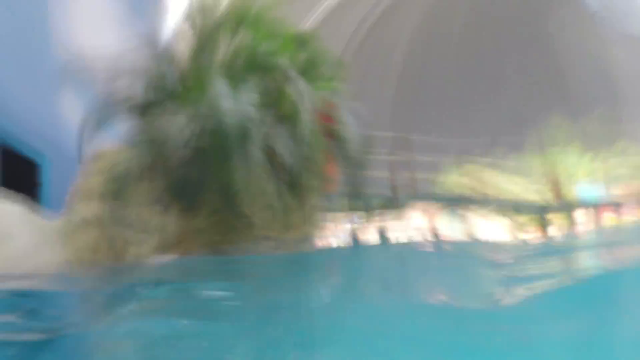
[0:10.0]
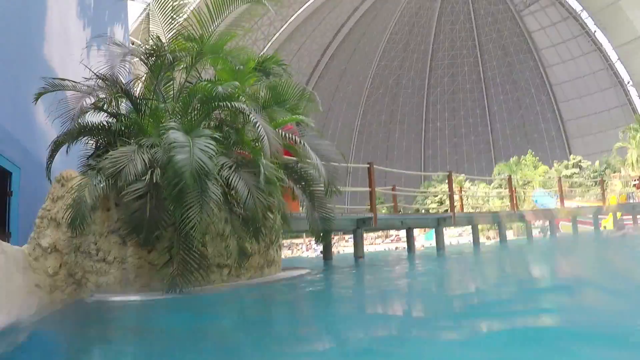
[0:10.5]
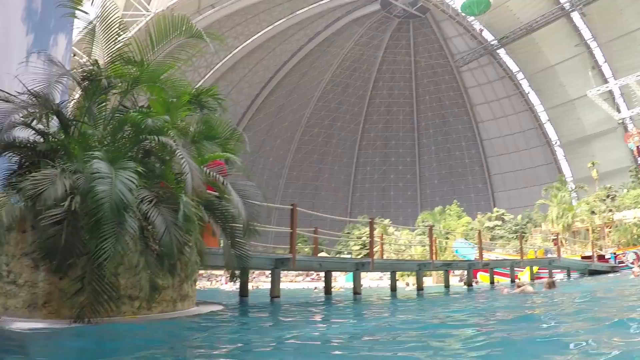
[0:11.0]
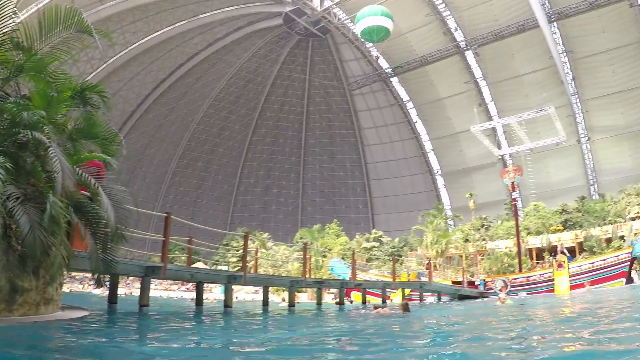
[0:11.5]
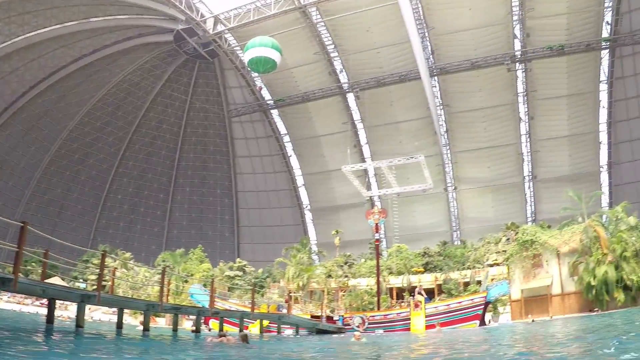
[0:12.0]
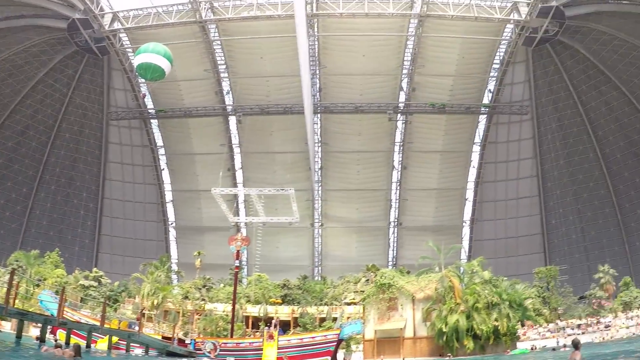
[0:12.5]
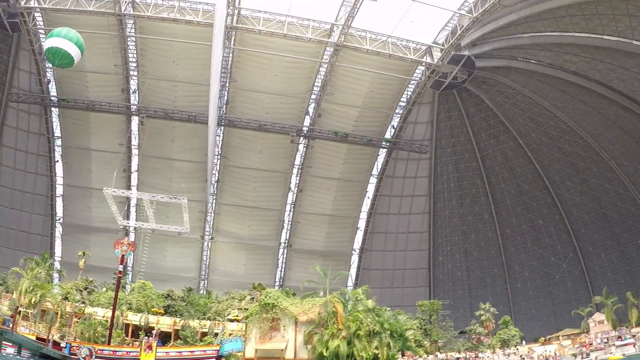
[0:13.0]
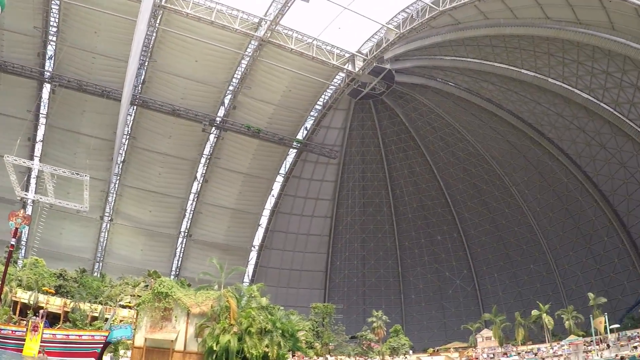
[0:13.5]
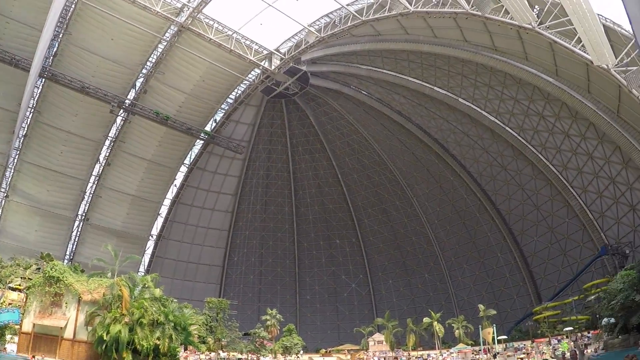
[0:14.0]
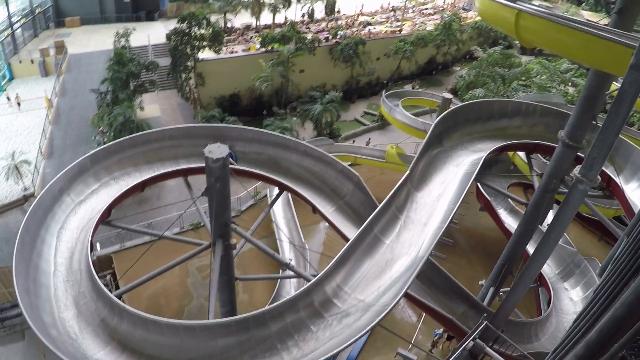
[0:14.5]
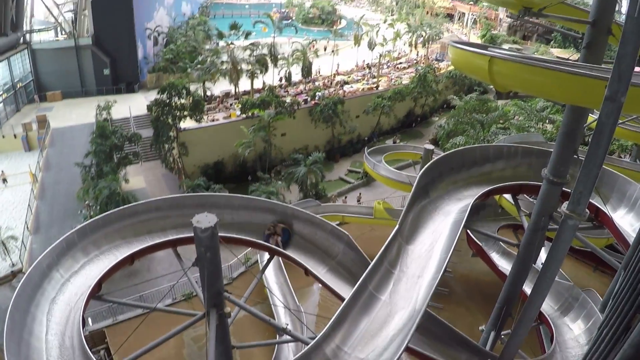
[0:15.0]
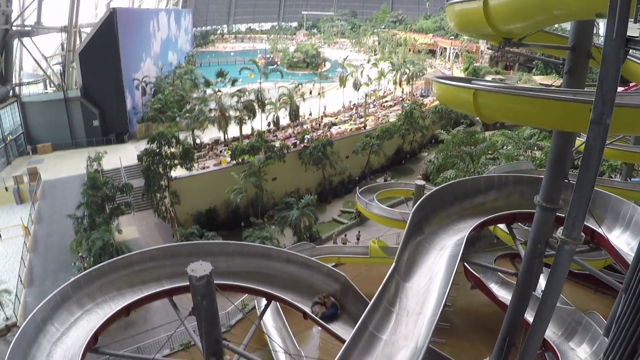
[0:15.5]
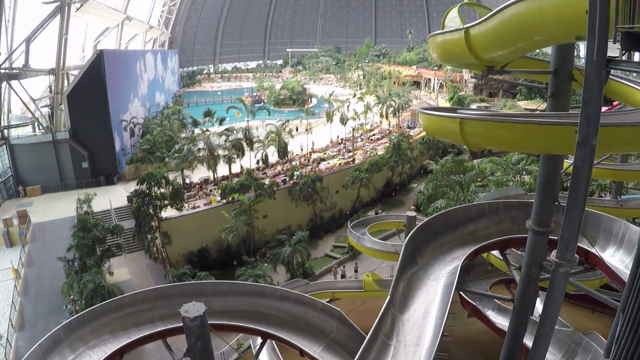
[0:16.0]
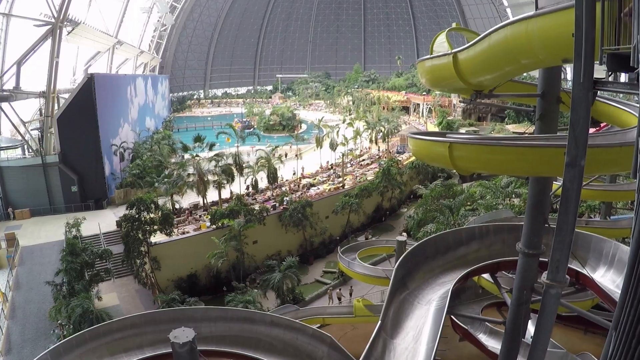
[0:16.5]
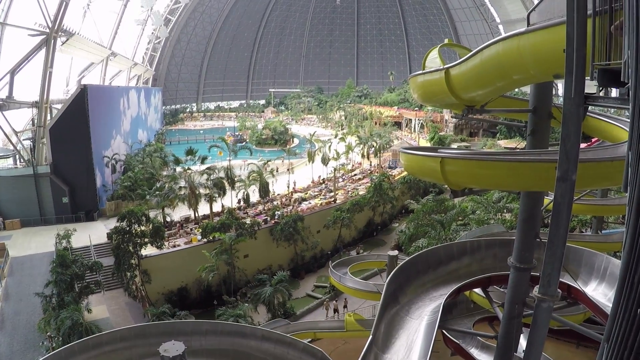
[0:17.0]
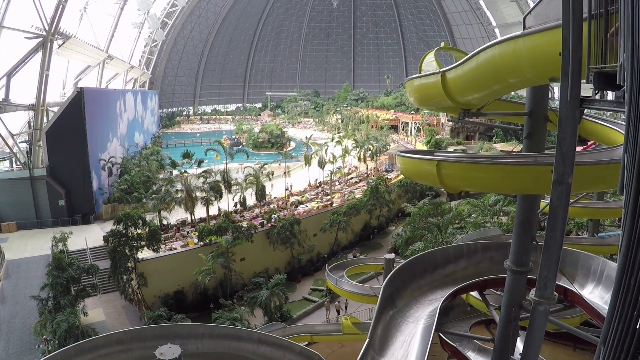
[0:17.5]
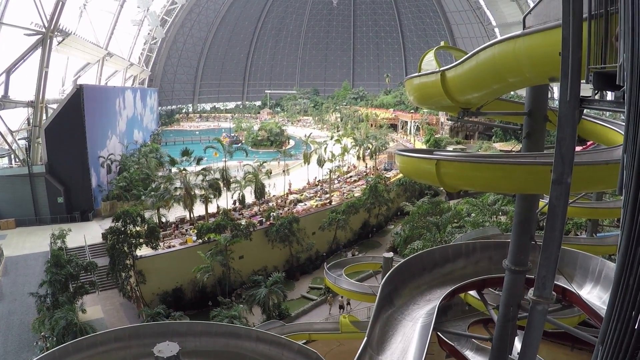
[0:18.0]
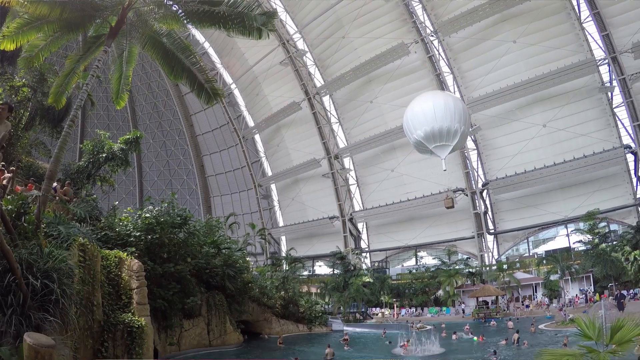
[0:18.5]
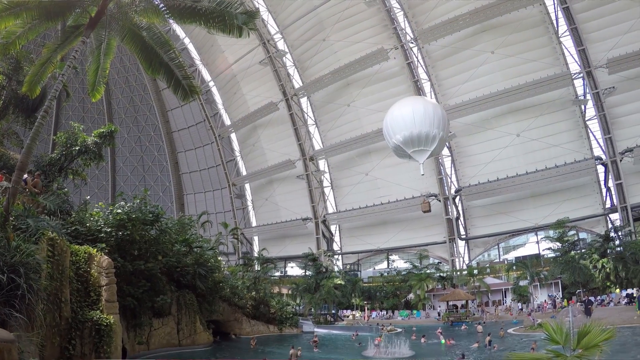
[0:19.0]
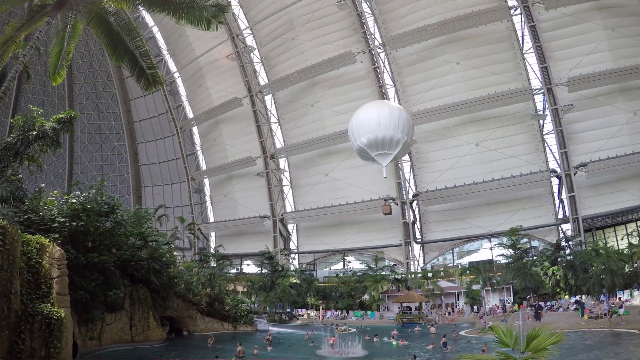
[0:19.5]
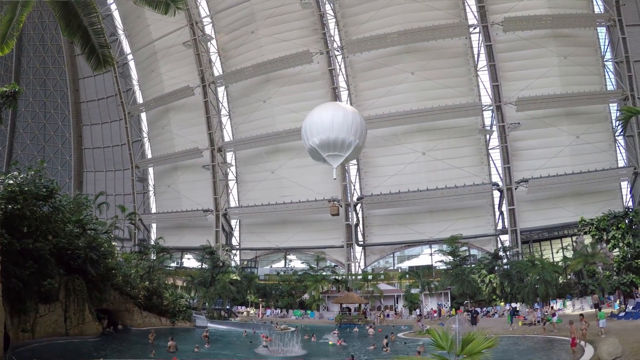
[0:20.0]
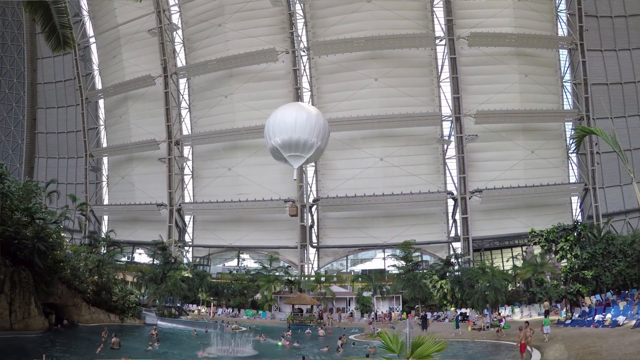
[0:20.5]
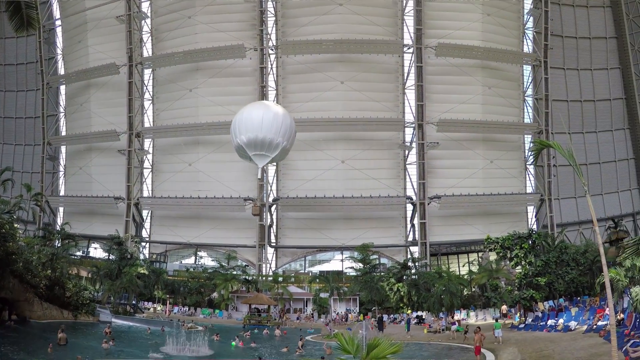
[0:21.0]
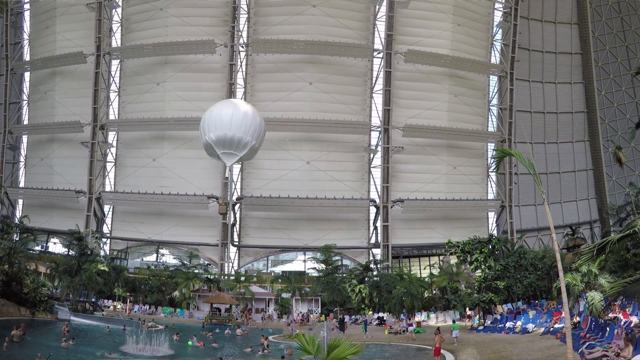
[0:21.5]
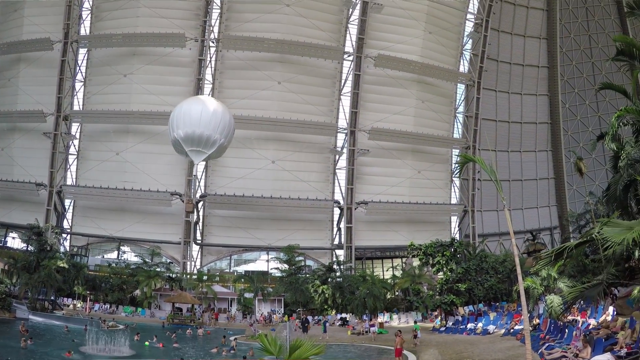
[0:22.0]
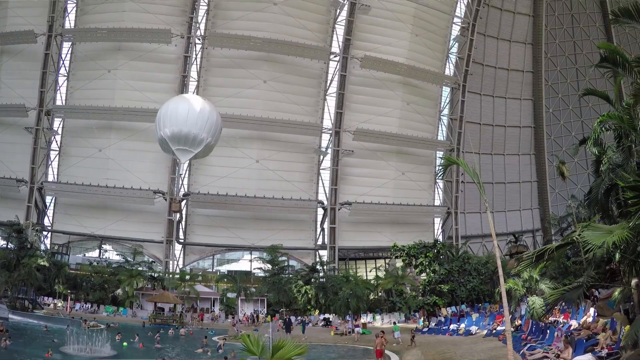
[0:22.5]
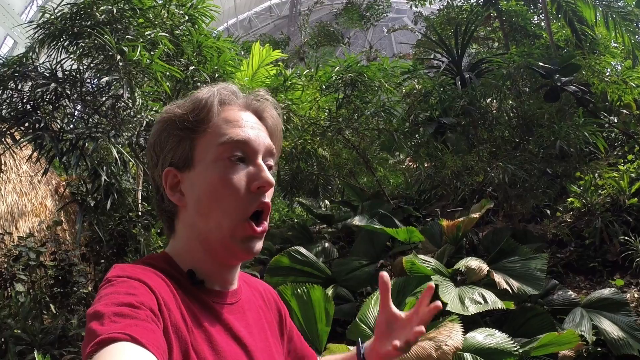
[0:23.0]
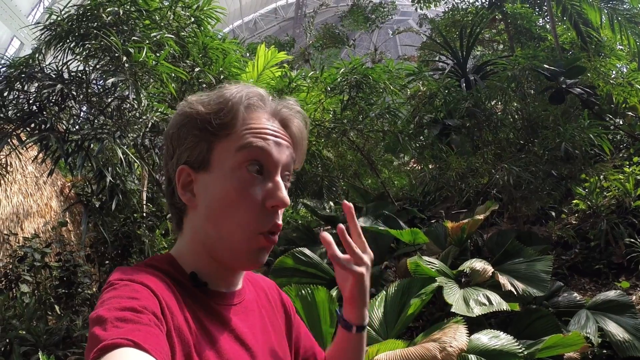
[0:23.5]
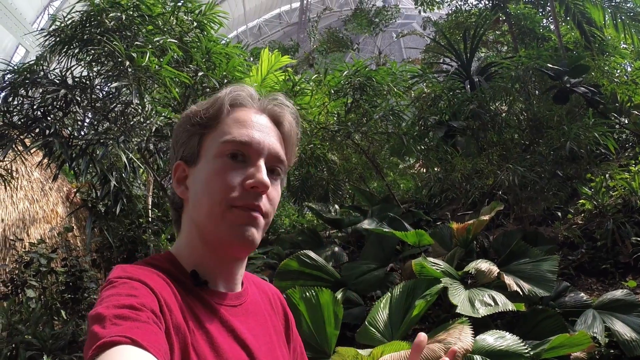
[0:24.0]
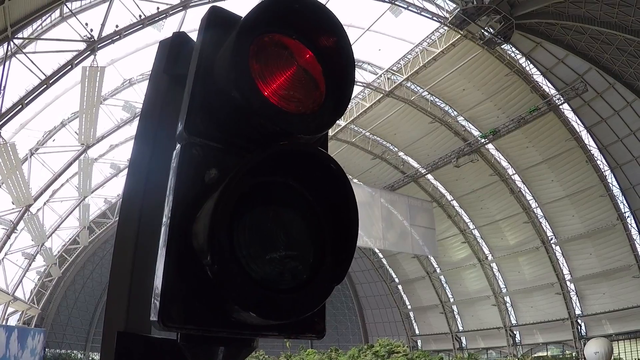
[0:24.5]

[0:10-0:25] A pool appears to be covered by a silver metal dome. There are trees in back of the pool, a wooden walkway with railings runs along the side edge of the pool, and big ferns and greenery are on the left-hand side. The sun shines down, suggesting the top may be open. The scene changes to a ride with a water slide made of long, twisting silver slides whose outsides are painted yellow, with the pool, a sand beach and palm trees in the background and greenery all around. People walk below through the courtyard. The huge dome, with many green trees inside it, is shown again, and a white hot air balloon with what looks like a straw basket is in the air. The camera pans around to show the greenery, and the man is seen talking again. In the center of the dome is a red and green traffic light with the red light lit.